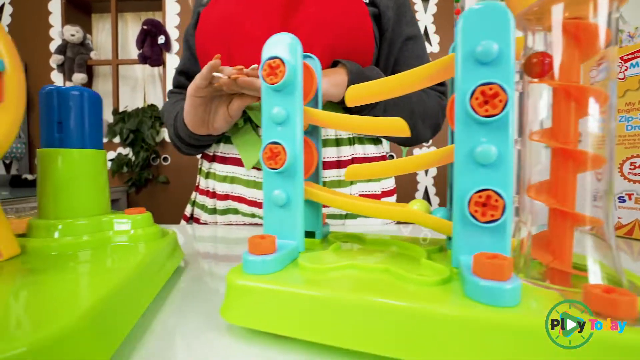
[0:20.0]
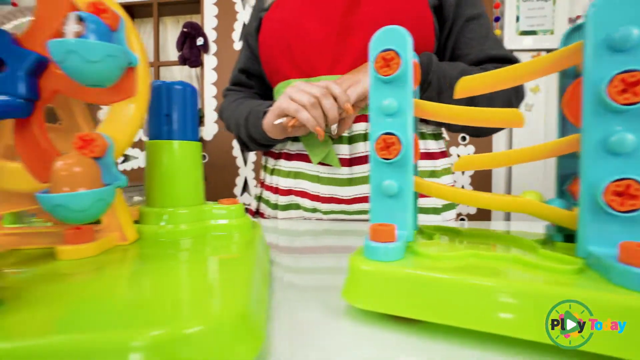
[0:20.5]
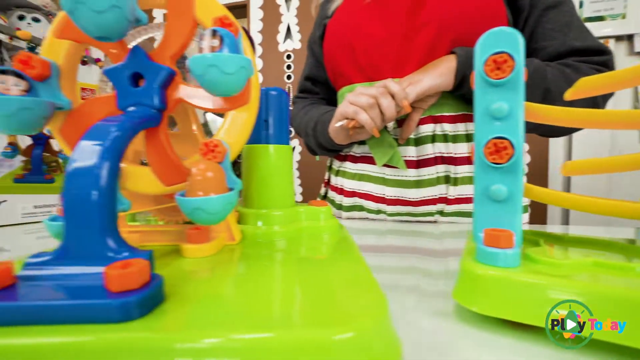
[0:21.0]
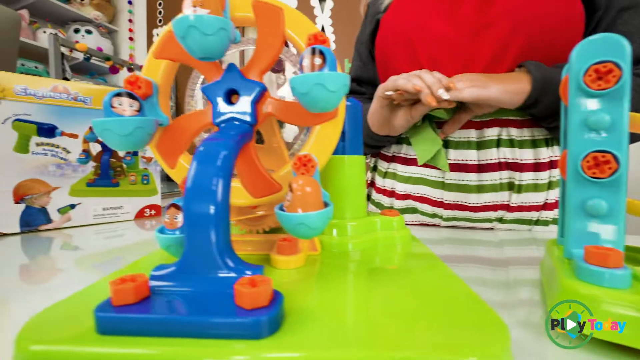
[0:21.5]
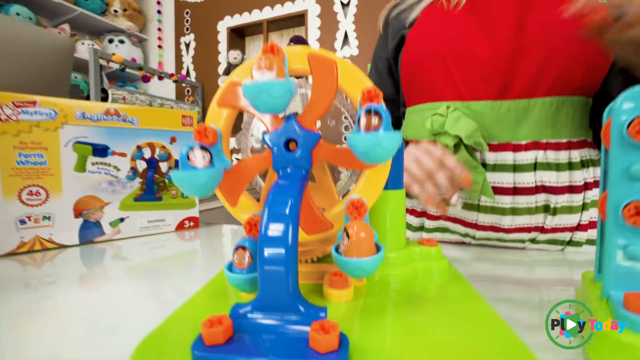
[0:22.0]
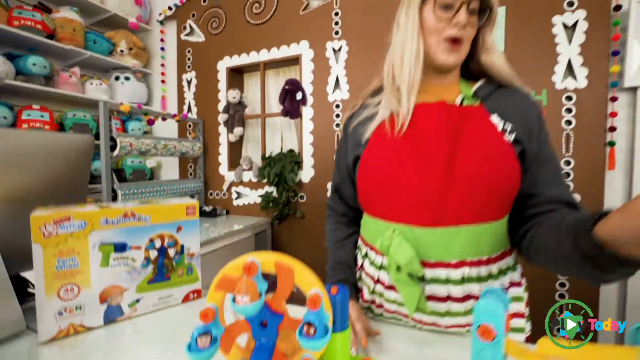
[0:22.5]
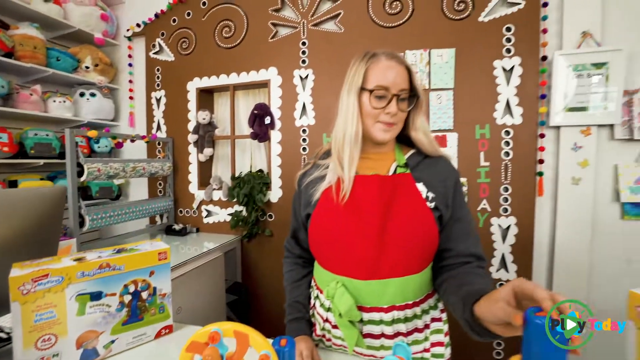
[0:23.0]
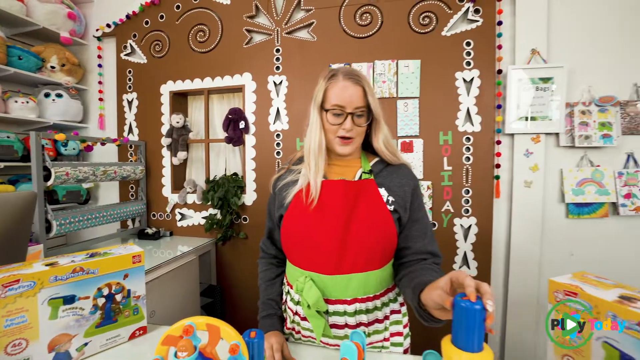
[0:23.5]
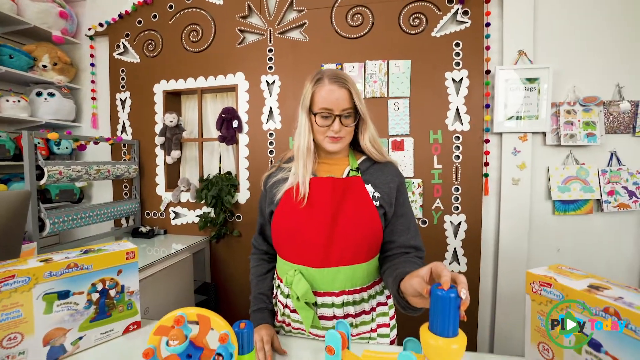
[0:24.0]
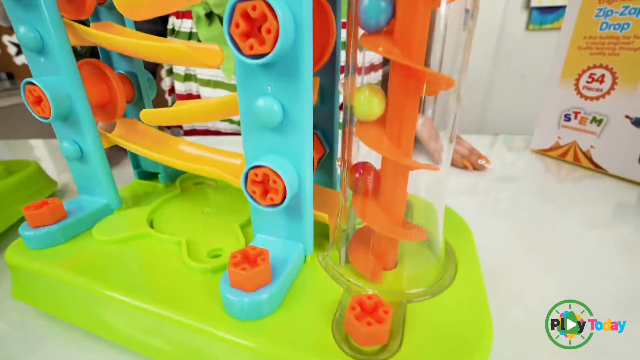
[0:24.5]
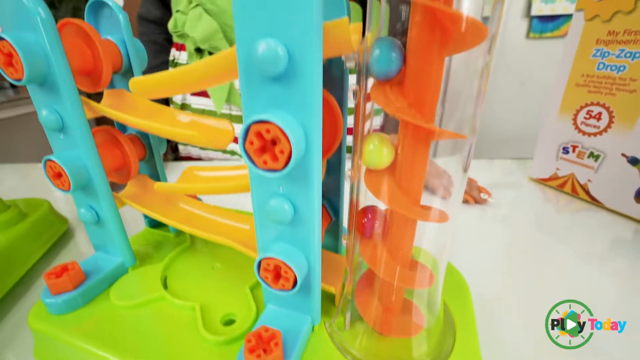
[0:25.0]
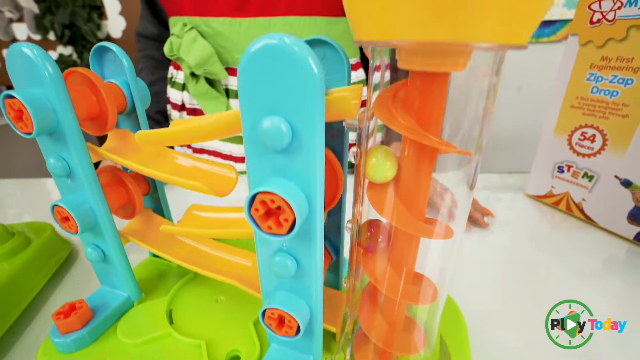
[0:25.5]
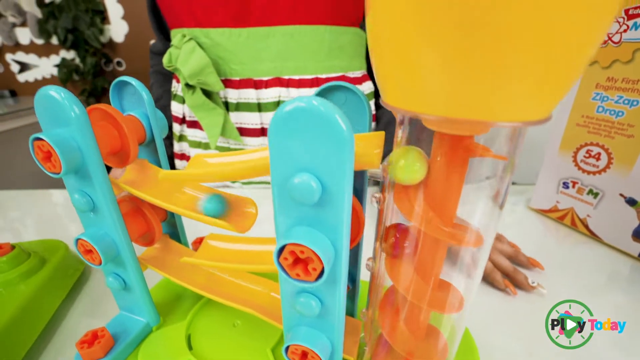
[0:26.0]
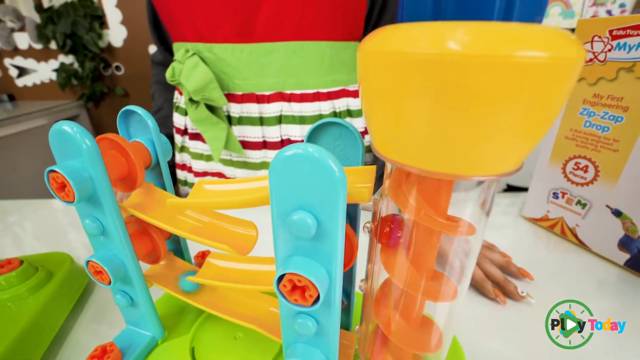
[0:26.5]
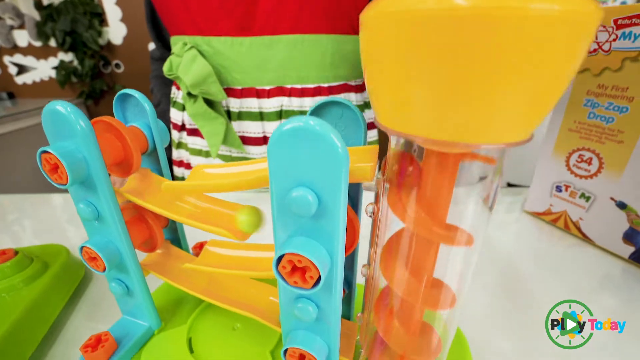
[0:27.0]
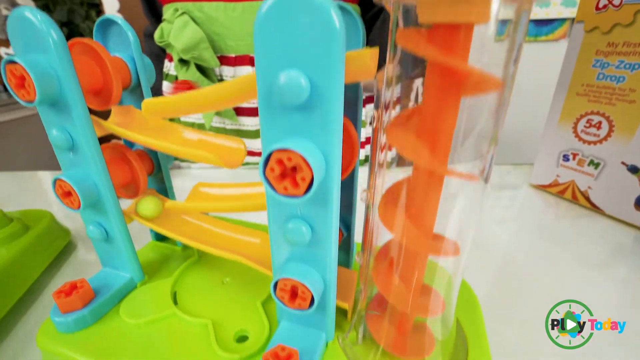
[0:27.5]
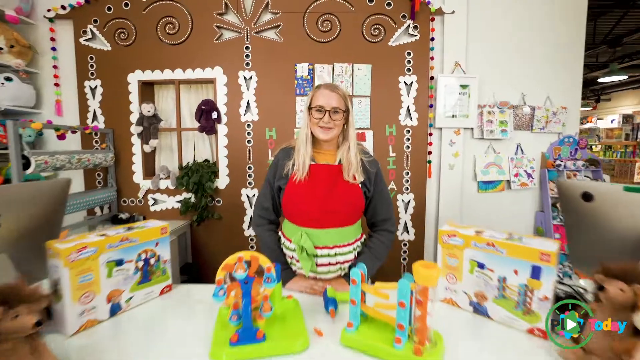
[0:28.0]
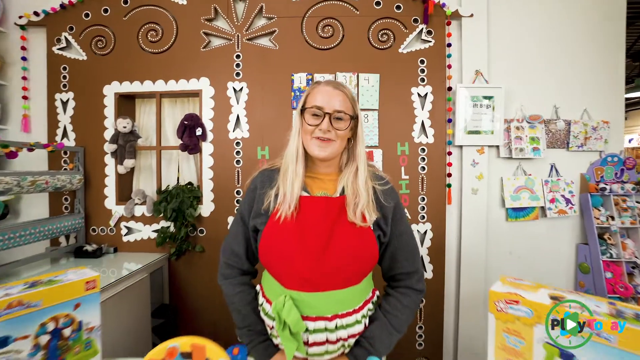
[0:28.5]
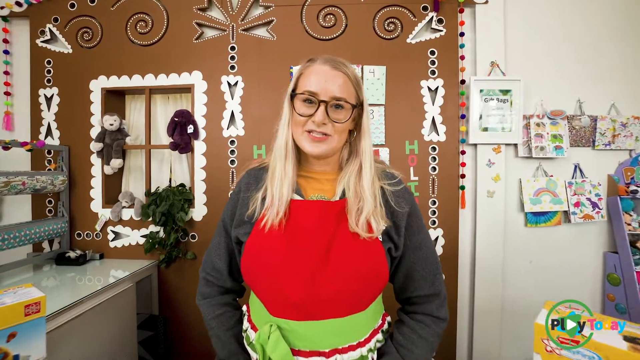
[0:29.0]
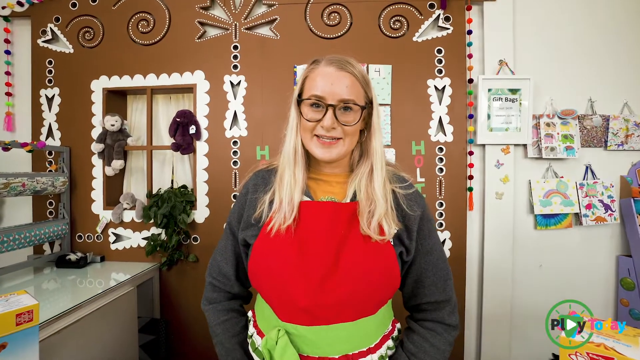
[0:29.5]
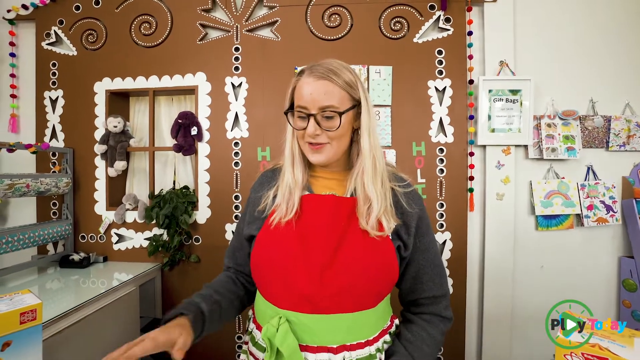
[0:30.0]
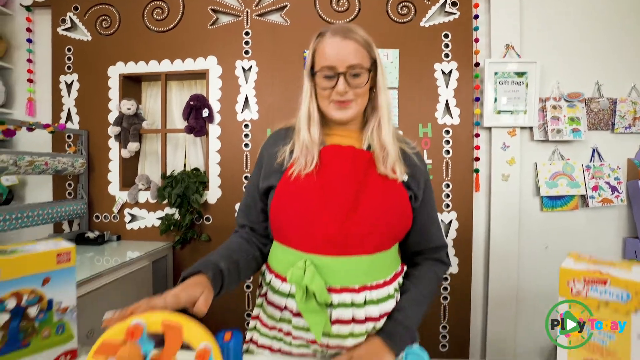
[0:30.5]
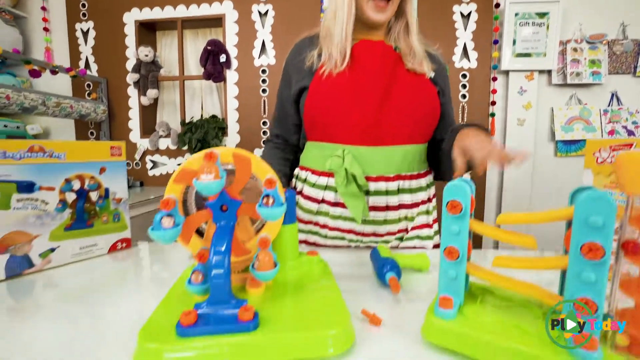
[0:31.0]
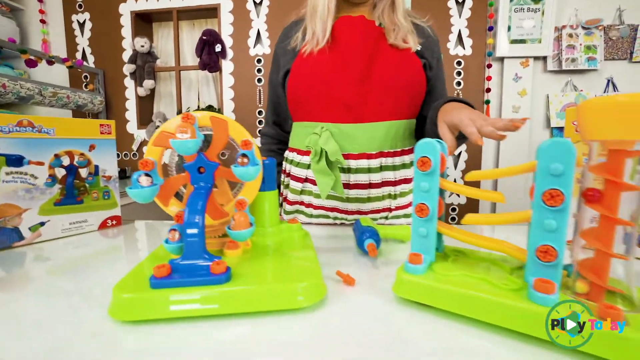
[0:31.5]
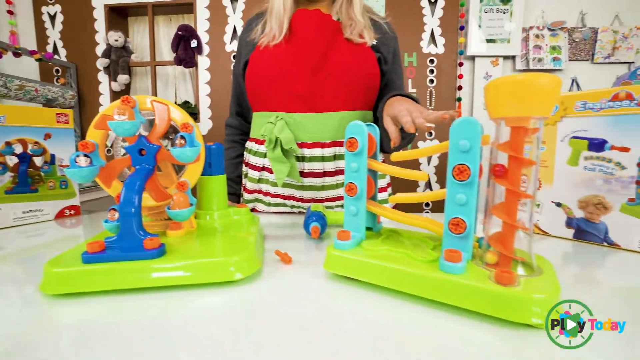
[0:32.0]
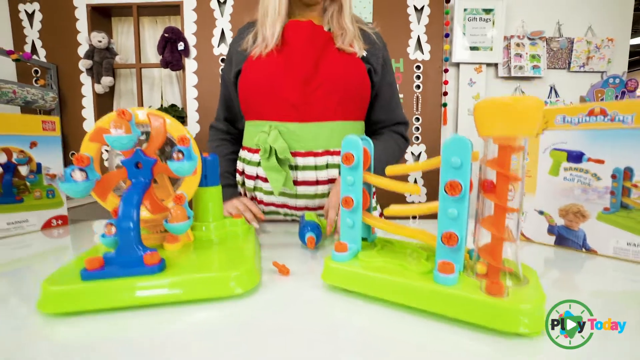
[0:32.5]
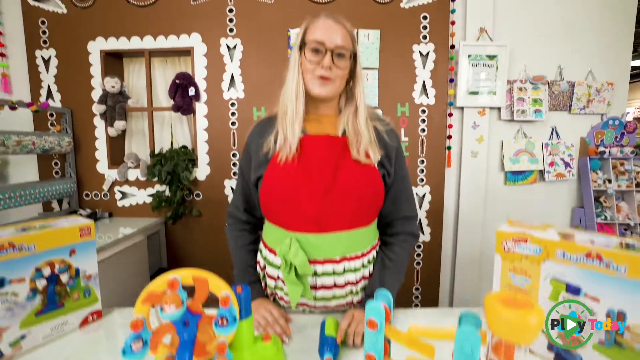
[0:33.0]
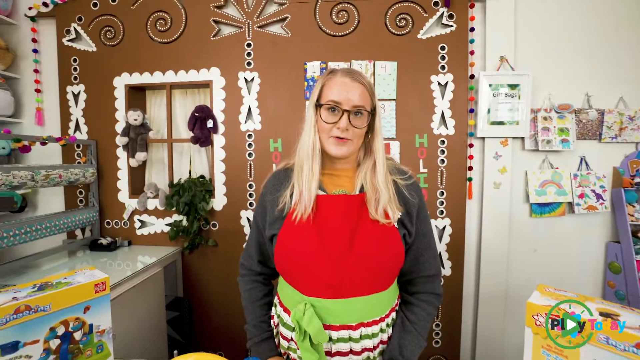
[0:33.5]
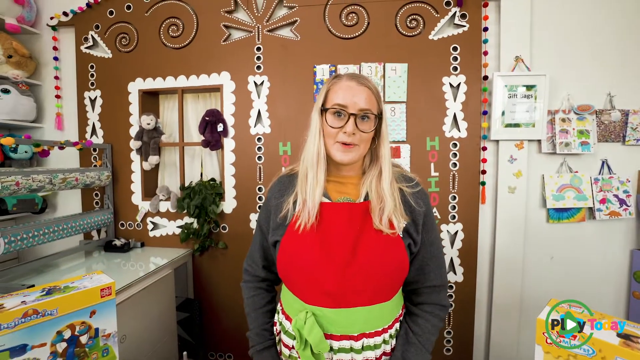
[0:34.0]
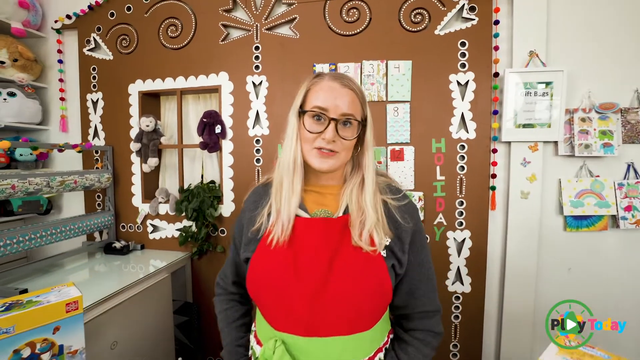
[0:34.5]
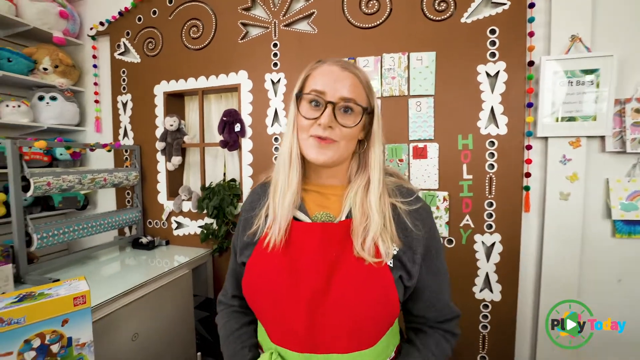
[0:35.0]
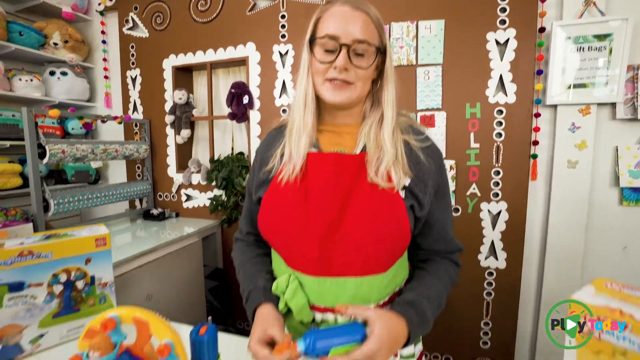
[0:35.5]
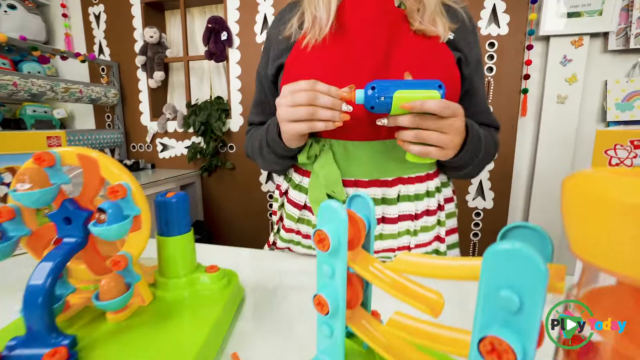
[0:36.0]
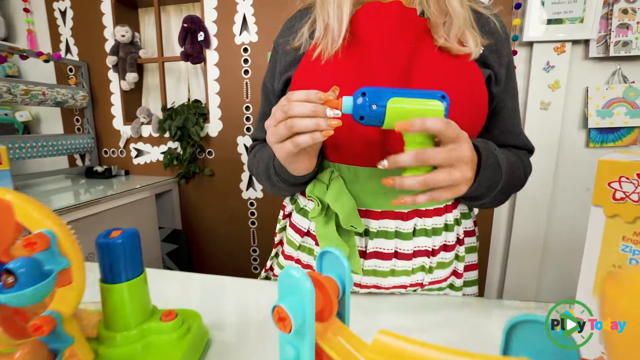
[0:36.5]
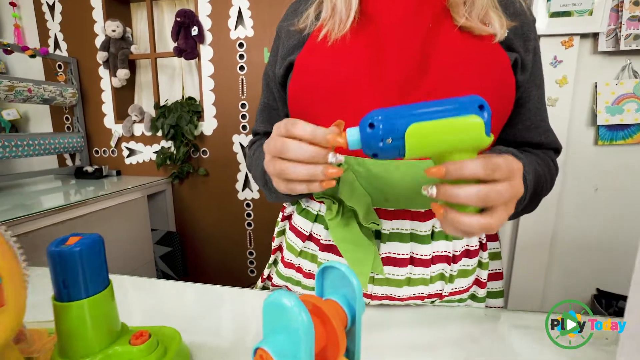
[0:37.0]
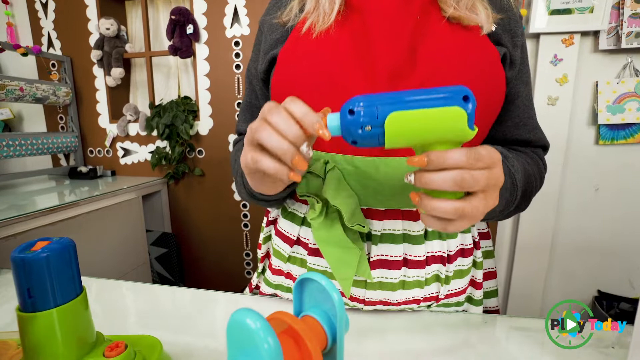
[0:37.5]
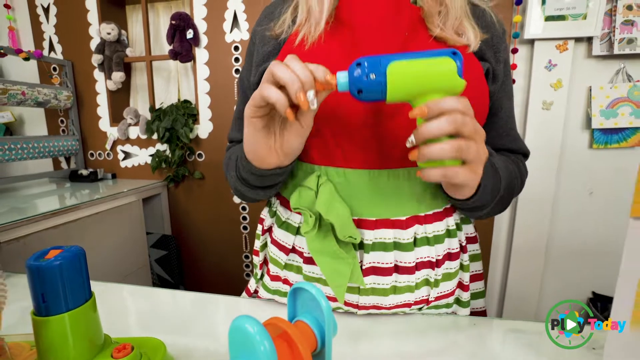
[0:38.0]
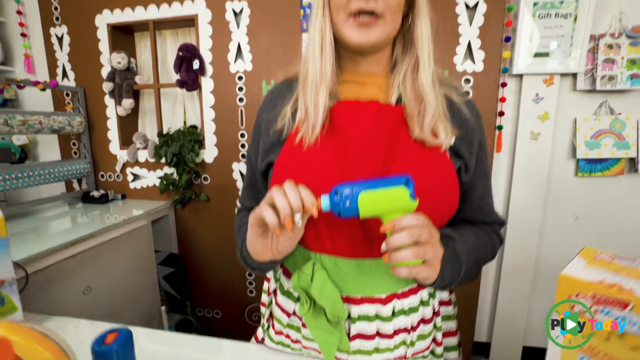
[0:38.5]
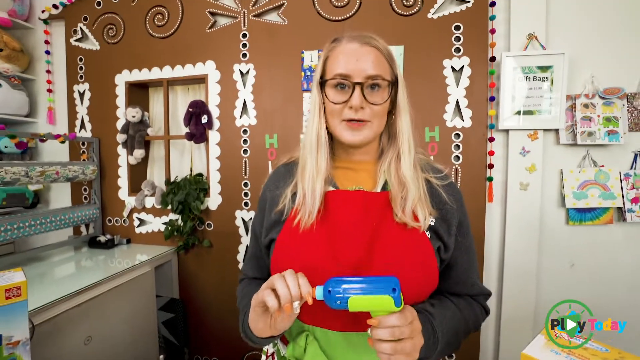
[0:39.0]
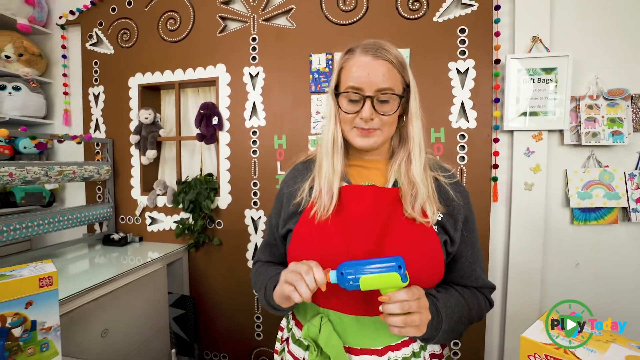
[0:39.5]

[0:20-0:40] The lady demonstrates how different toys work and how they are played with. The scene has changed: she is now further back in the shop, behind the counter, and the shot seems closer than before. The toys she is showing are visible, with three on display. Toward the end she picks up a toy gun and is about to demonstrate it, but the demonstration is not shown.